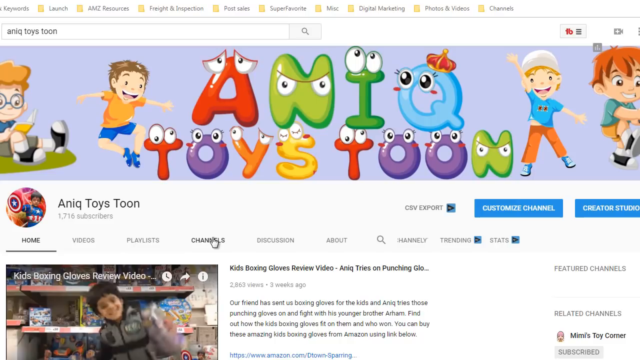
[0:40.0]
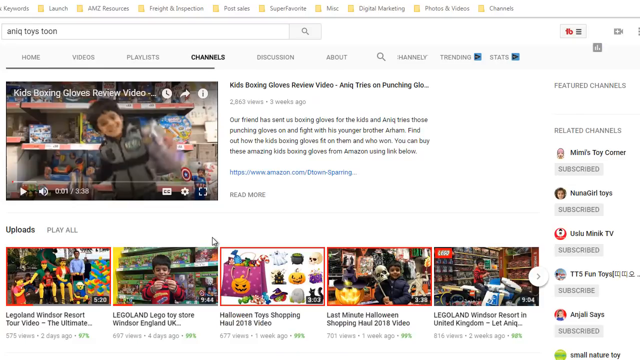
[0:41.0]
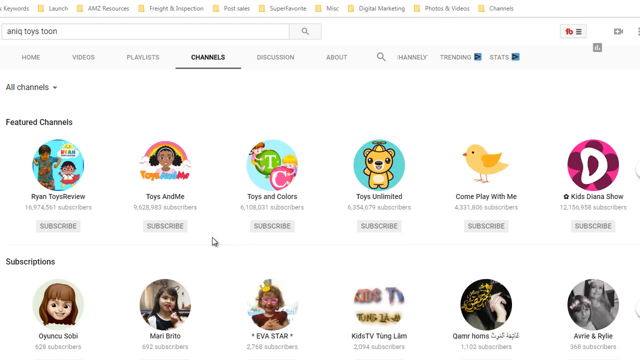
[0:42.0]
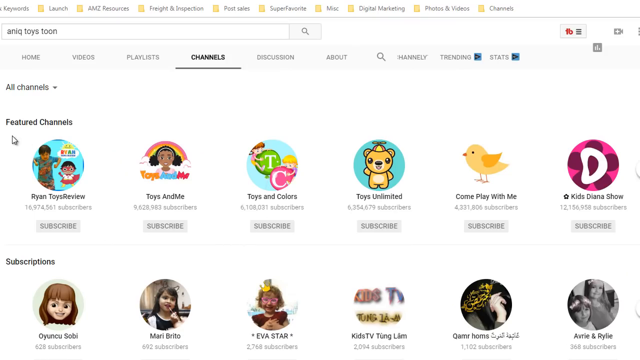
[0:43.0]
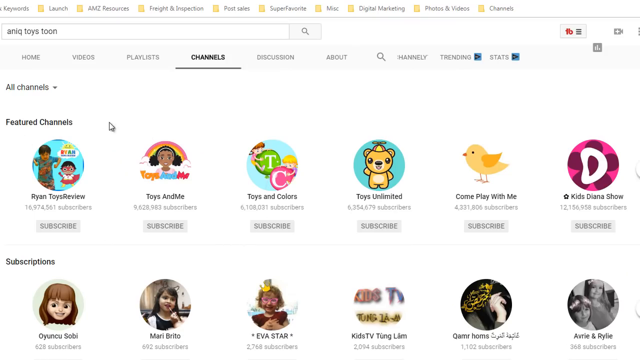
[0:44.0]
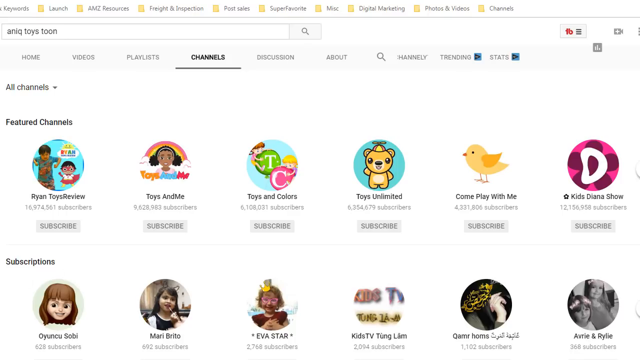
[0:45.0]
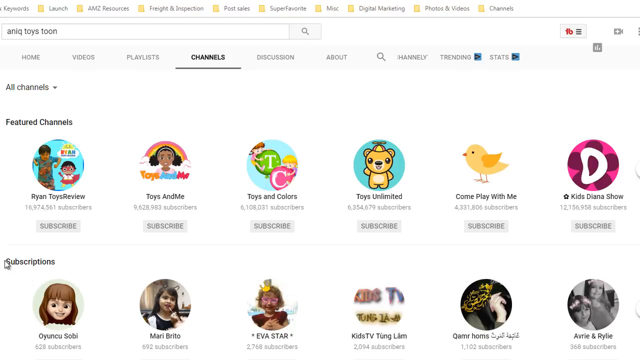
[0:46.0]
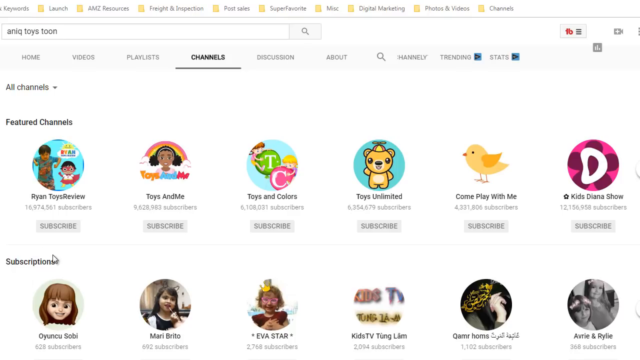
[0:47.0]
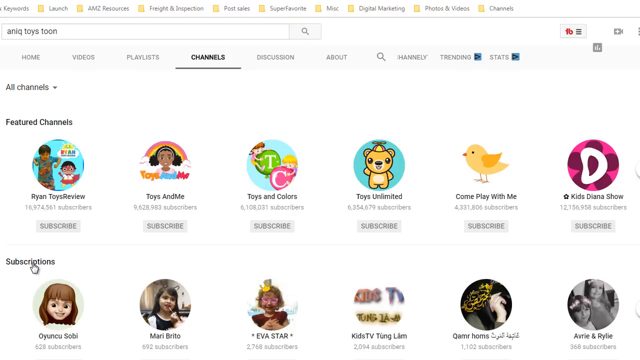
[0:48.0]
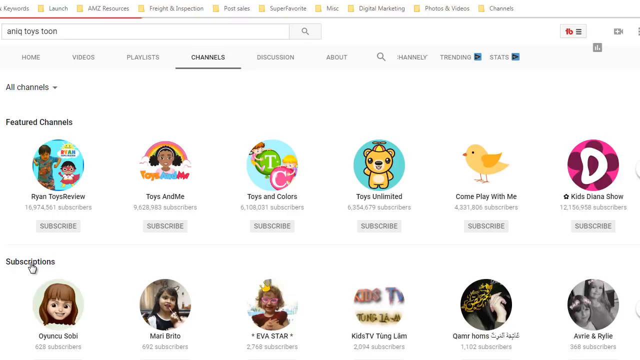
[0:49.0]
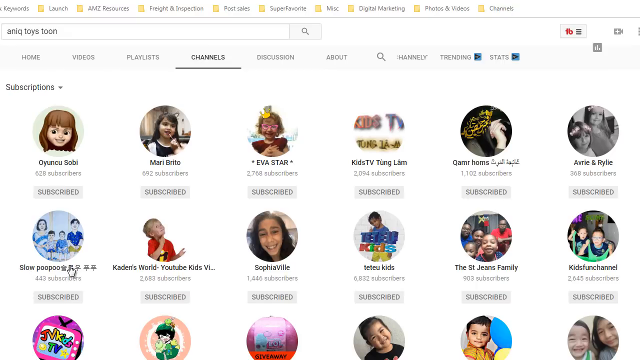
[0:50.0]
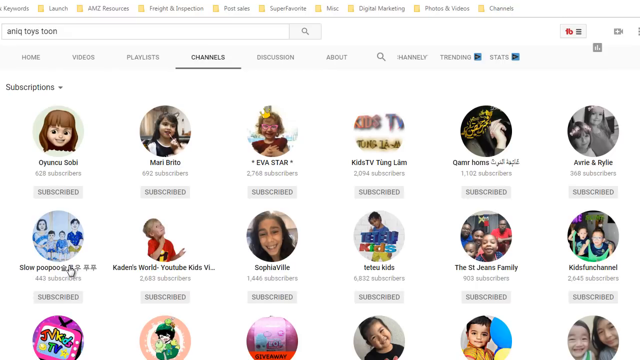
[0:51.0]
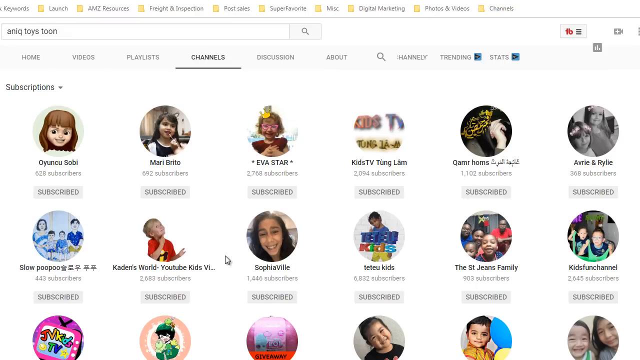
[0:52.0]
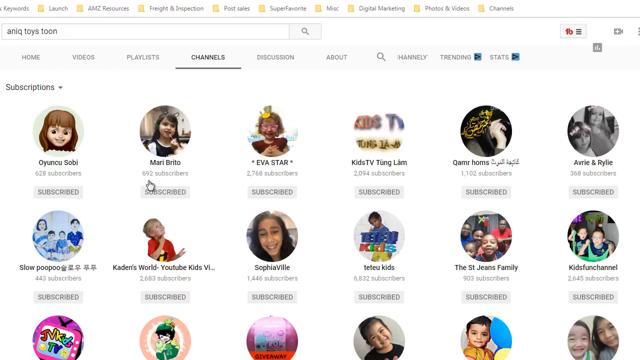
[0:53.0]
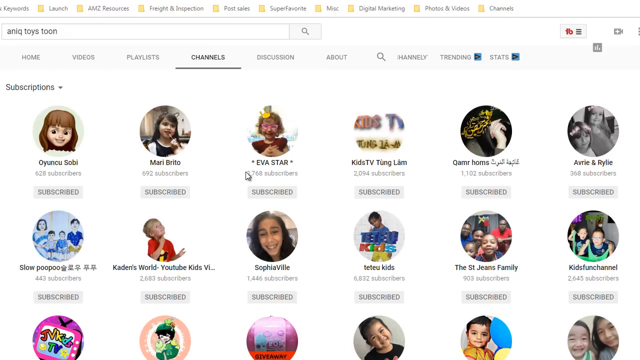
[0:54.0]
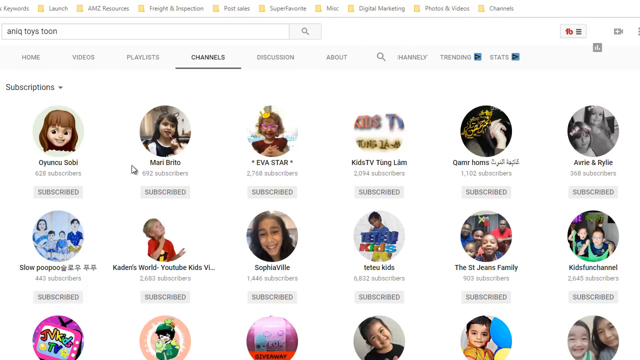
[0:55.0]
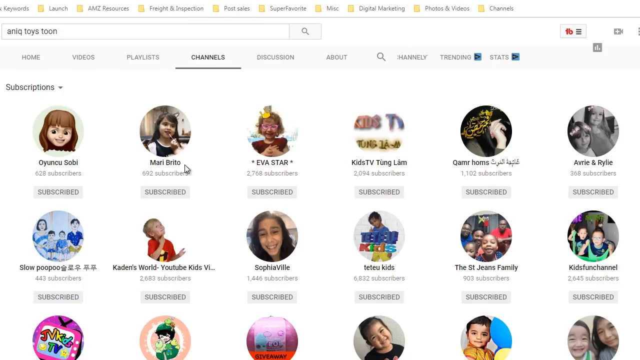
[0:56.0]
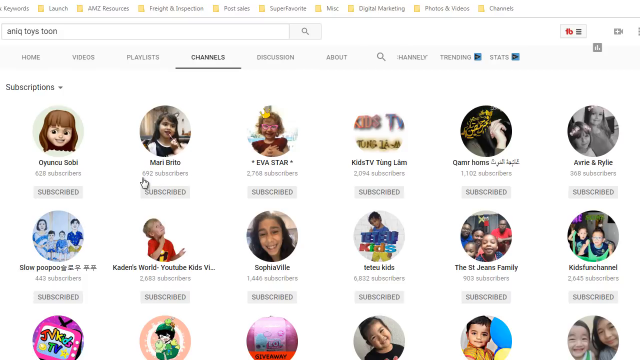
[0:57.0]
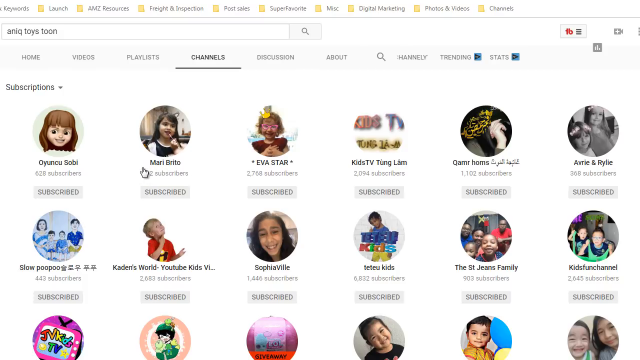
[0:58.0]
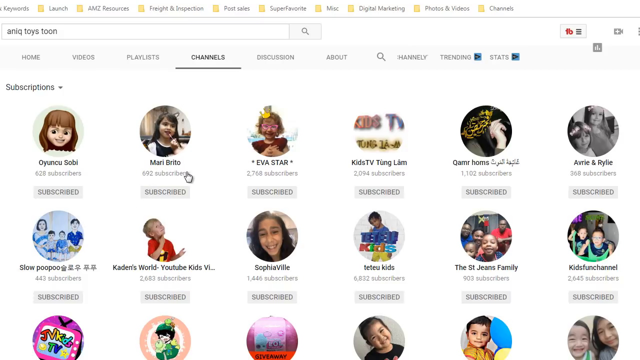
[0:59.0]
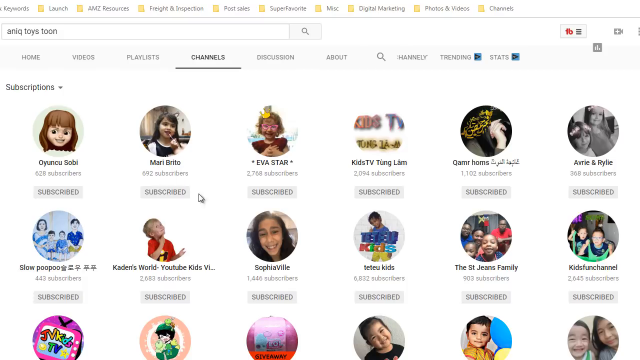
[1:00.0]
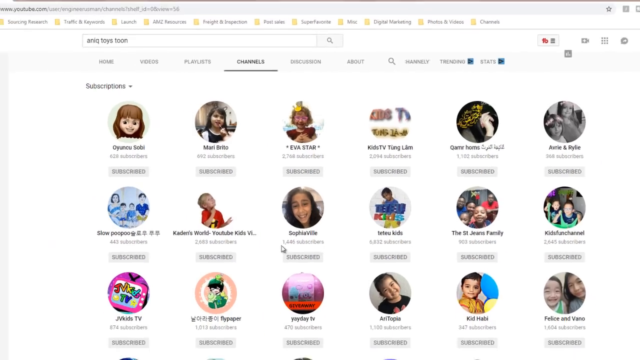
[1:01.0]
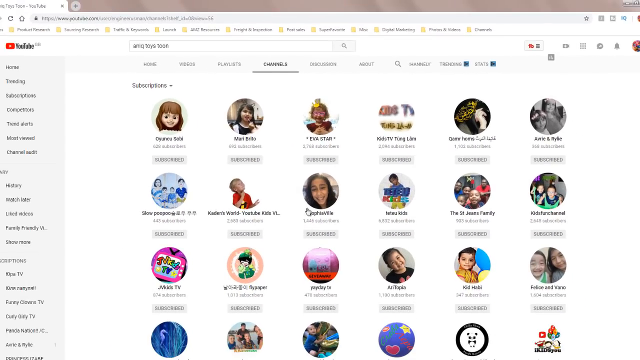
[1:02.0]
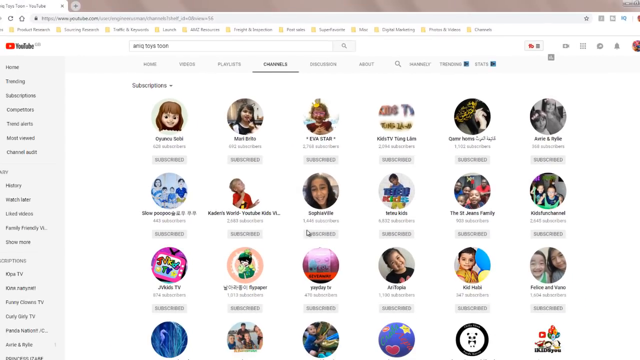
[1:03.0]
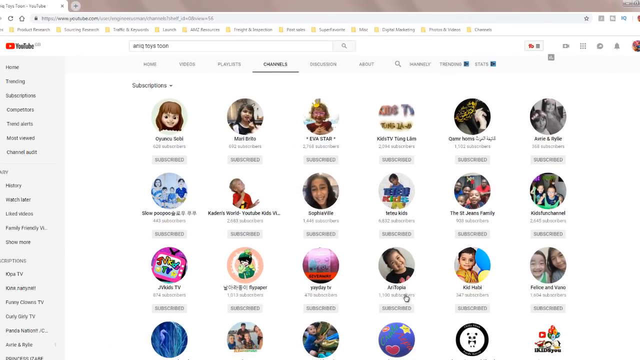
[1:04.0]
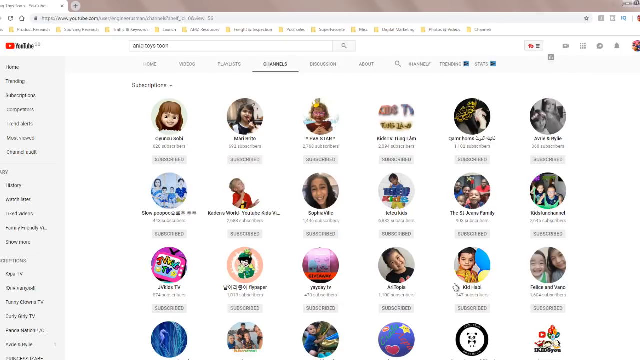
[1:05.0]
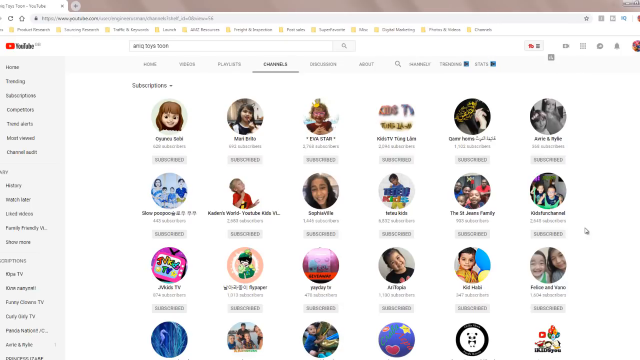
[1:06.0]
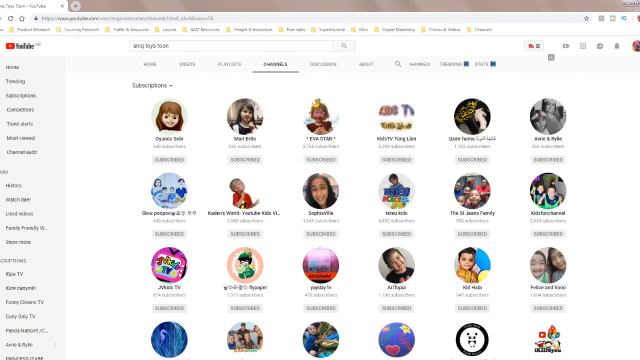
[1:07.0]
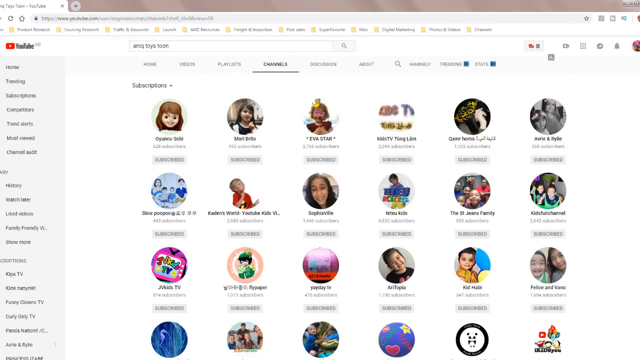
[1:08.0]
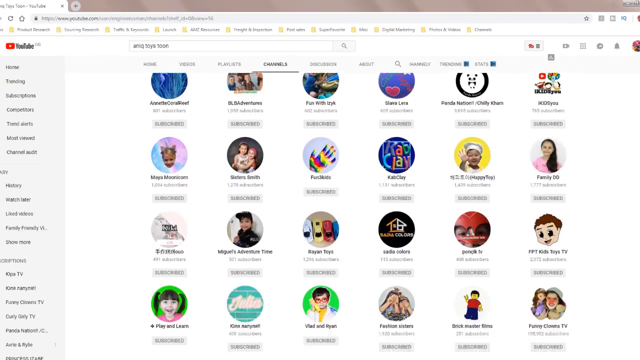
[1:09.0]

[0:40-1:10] What seems to be a website called Anik Toys Toon is on screen. It is a website for kids, with a lot of colorful animation and cartoony things. There are many options: customize channel, create a studio, homepage, videos, playlists, channels, discussion, trending and stats. Below that are more featured channels, including toys and me, toys and colors, toys unlimited, come play with me and kids Diana show. There is also a subscription option below. The person clicks on subscription and a whole lot of faces appear on the screen, which are the different channels, such as Yves Astor, Sophia Vaux and the St. Jean's family. The person seems to be circling a specific channel. The camera then zooms out, showing even more channels, and scrolling down reveals even more.